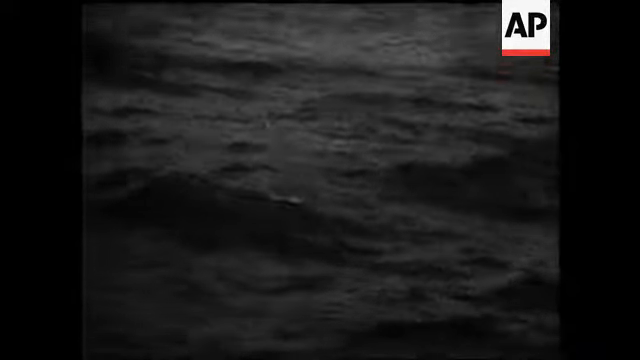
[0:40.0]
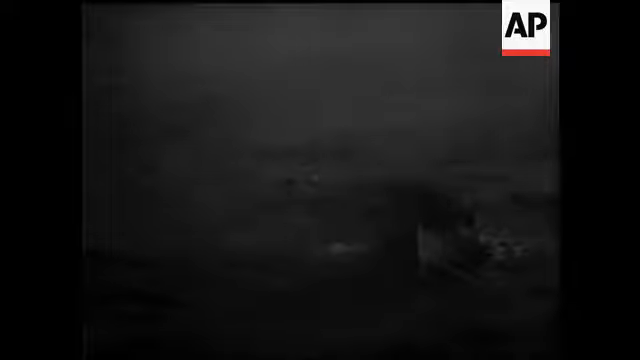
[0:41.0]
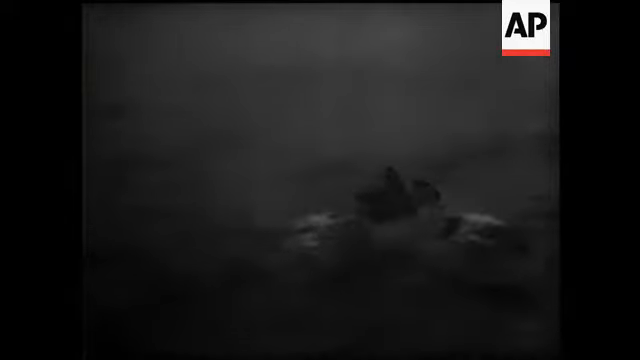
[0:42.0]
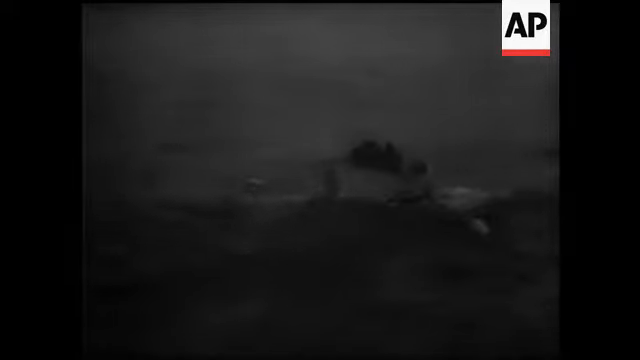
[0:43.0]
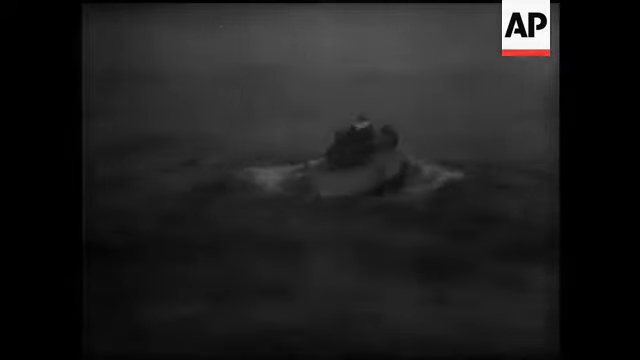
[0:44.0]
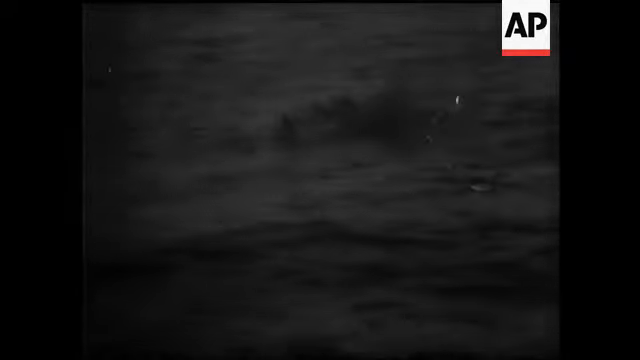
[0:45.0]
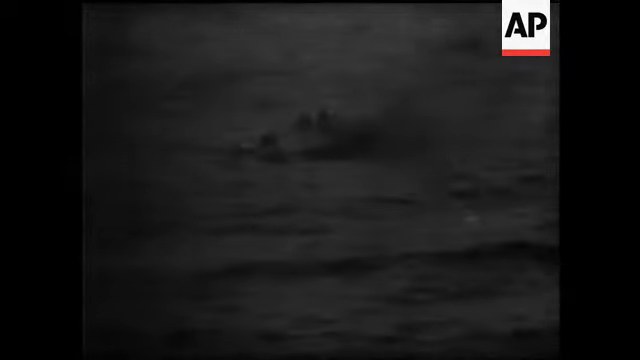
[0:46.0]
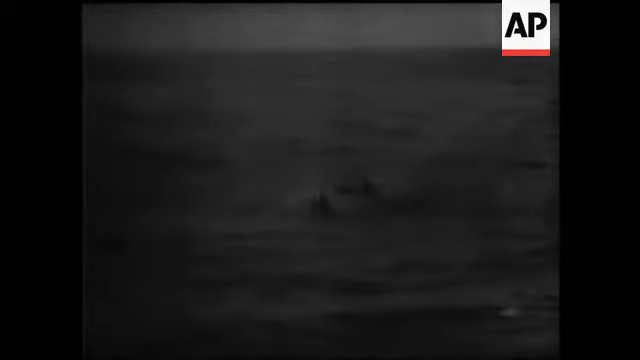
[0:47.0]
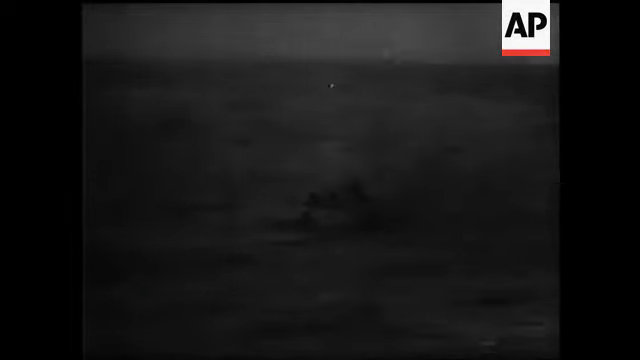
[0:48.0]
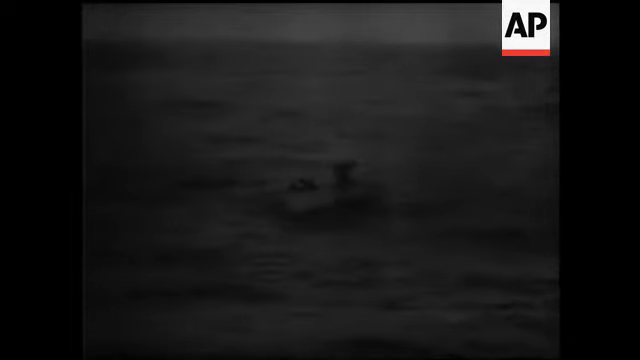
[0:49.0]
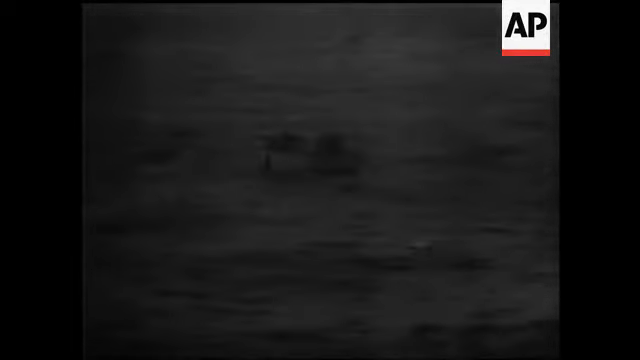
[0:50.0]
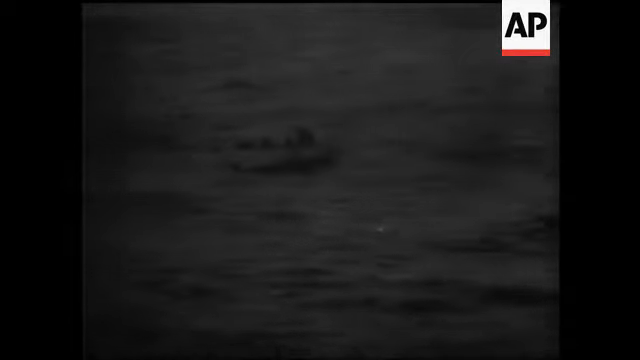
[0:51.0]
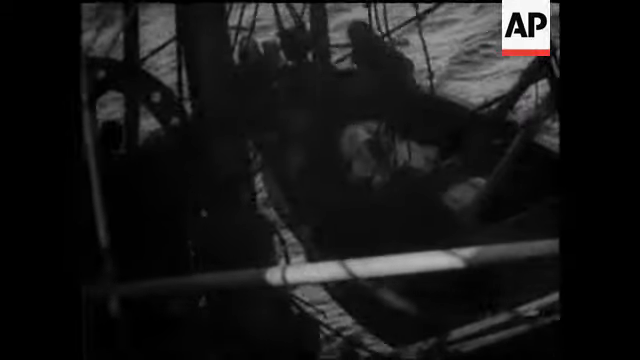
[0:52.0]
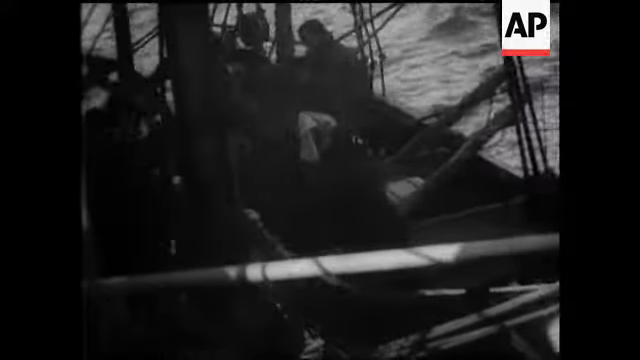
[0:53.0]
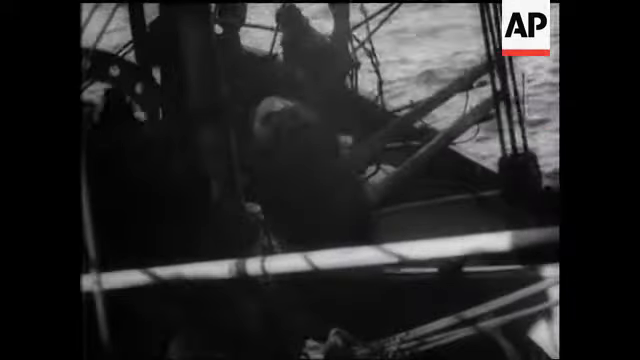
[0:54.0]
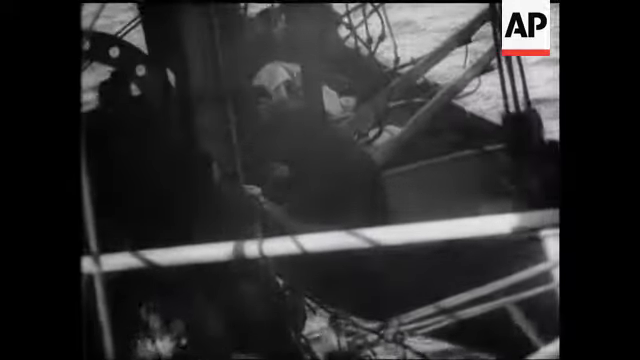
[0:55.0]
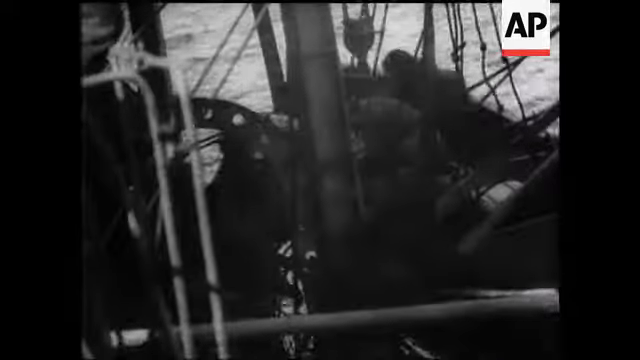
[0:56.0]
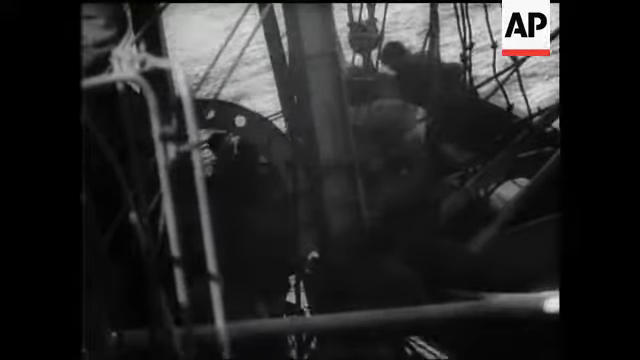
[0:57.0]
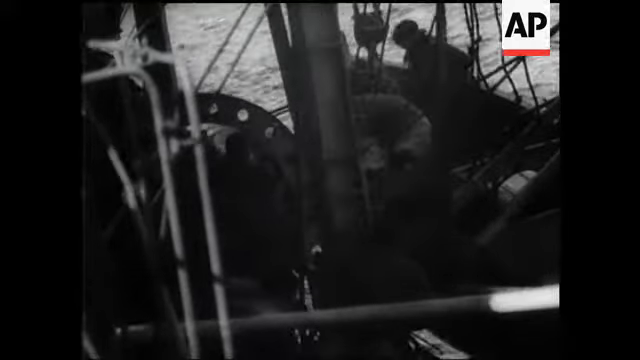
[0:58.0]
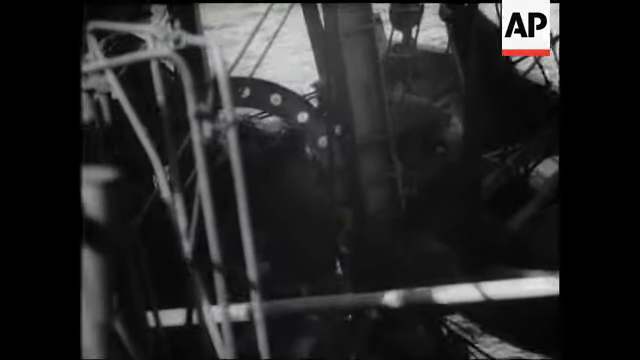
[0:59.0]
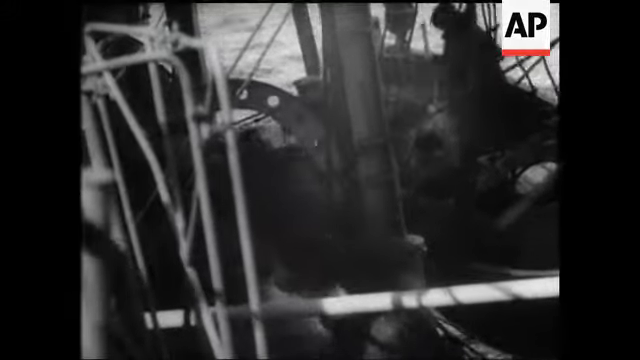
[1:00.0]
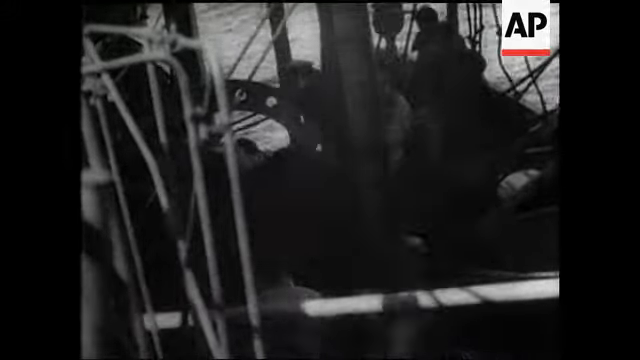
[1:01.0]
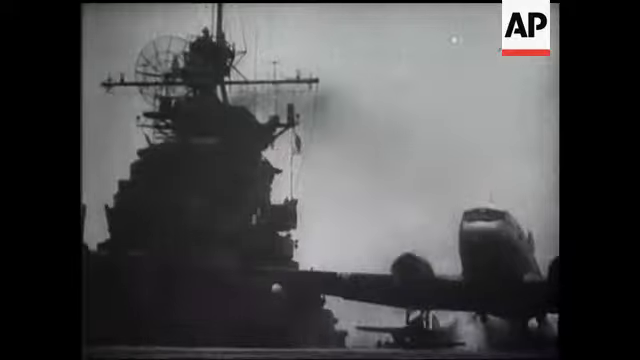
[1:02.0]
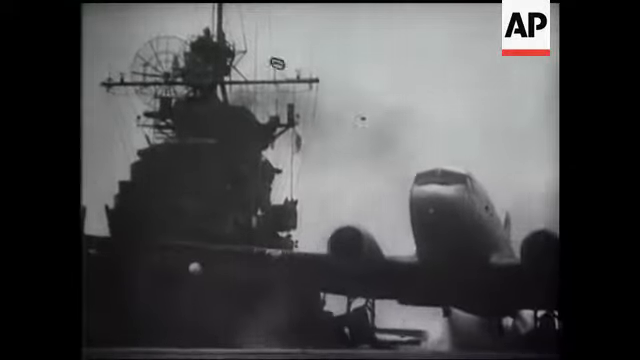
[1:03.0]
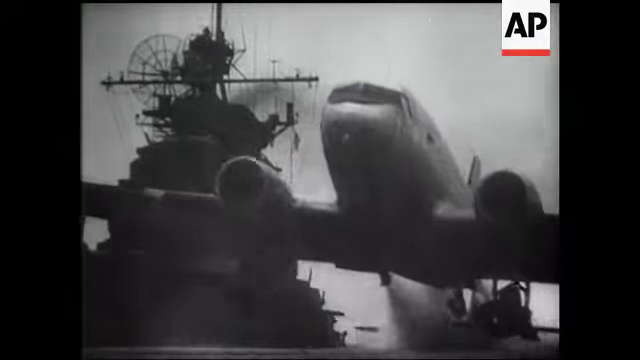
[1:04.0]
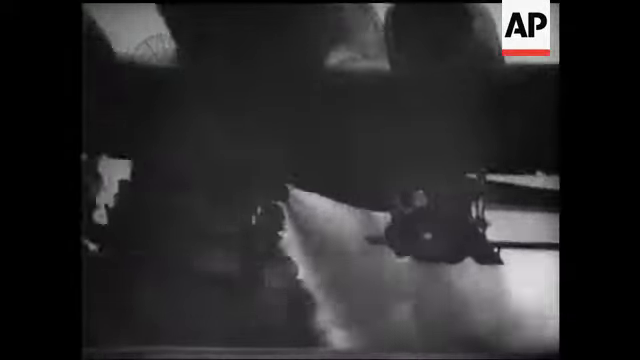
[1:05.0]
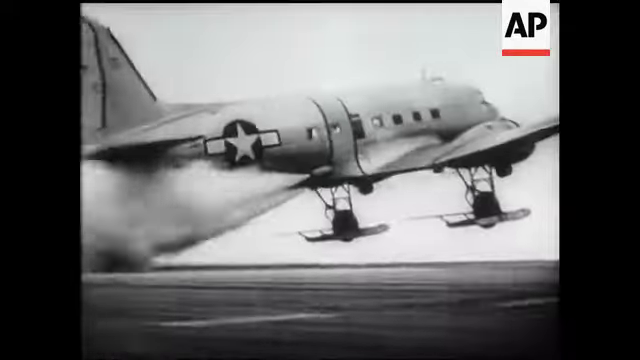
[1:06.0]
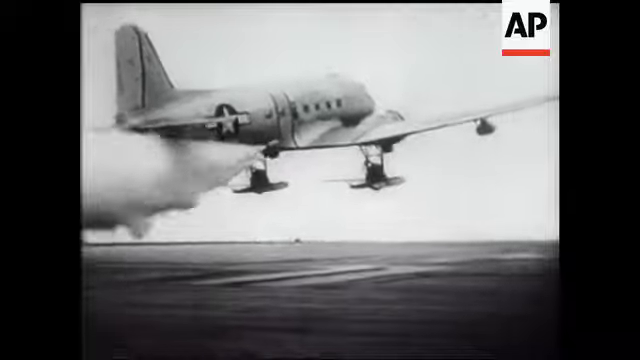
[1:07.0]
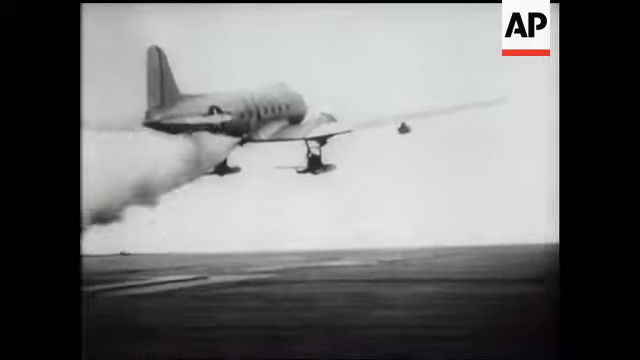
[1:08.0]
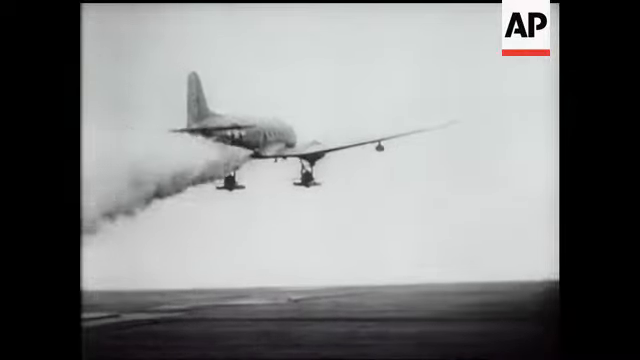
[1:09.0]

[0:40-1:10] The man who fell off the seat is rescued from the sea by a rowing boat sent out from one of the ships, apparently with about four or five men on board. They get him, and the rowing boat comes back to the ship, where various people get off it and come back on board. The scene then cuts to what appears to be an aircraft carrier, with a twin-engine passenger plane like a Dakota Douglas taking off from its deck while the ship's control tower looks over it. The plane has skis attached to its landing gear and creates a great deal of vapour as it flies up into the air. At the very end, several planes fly together.